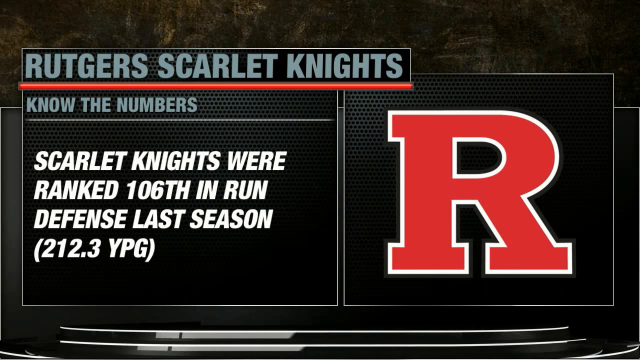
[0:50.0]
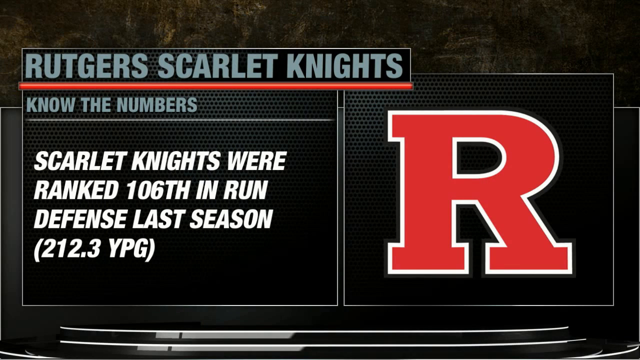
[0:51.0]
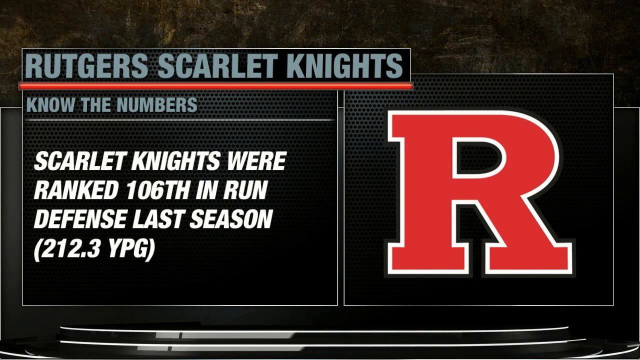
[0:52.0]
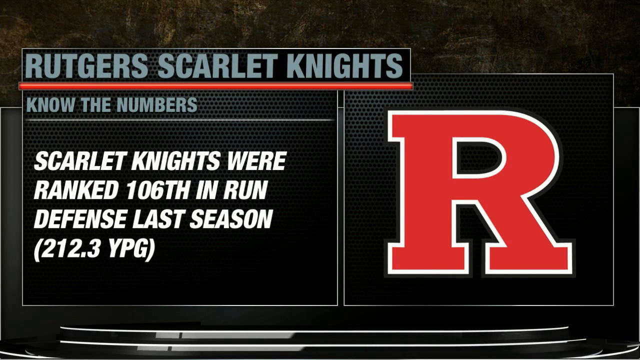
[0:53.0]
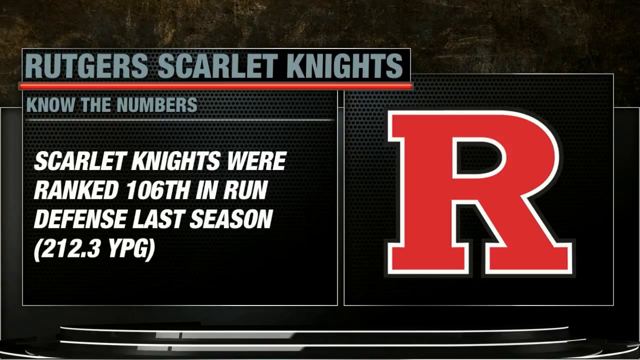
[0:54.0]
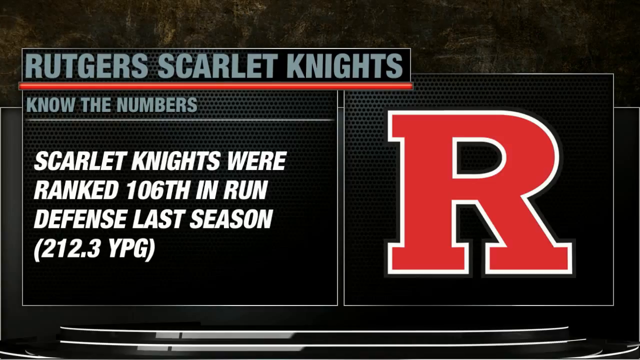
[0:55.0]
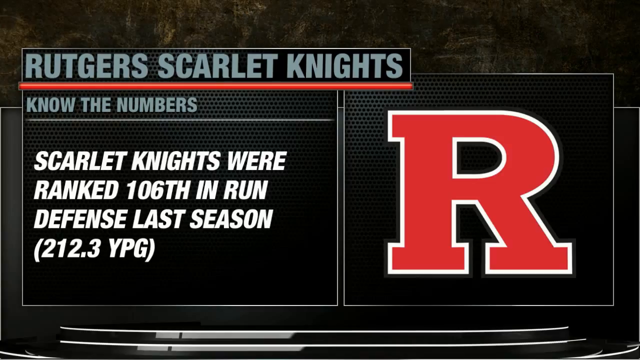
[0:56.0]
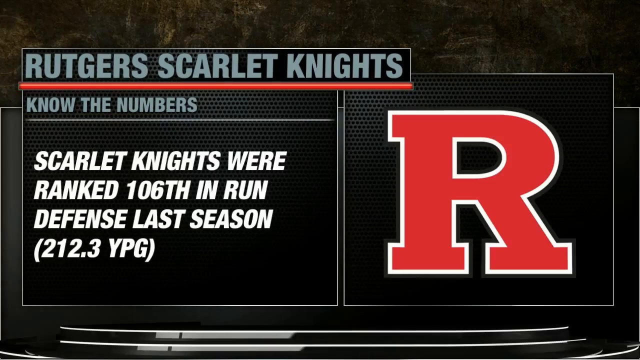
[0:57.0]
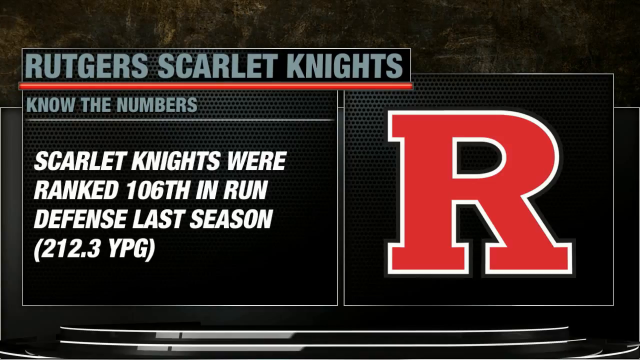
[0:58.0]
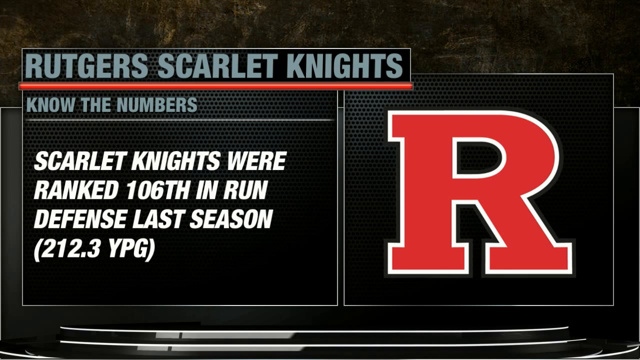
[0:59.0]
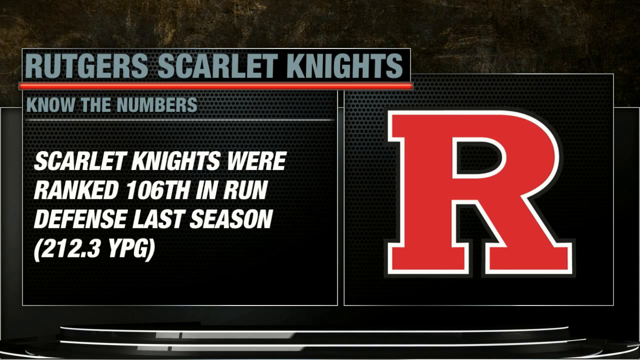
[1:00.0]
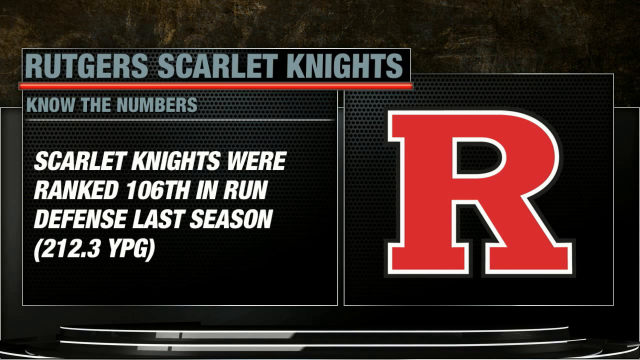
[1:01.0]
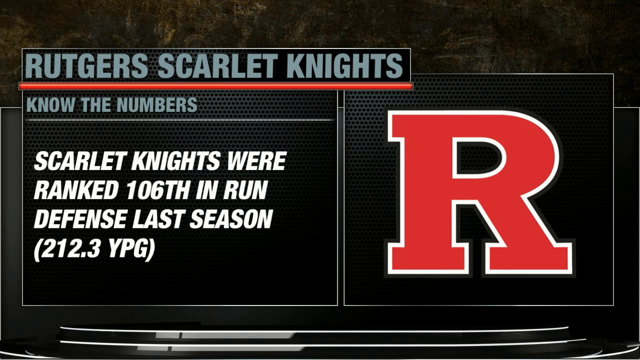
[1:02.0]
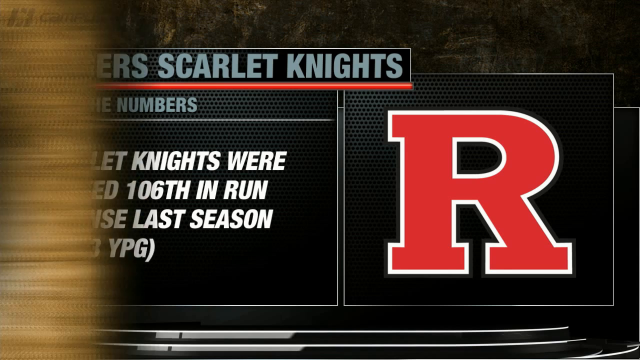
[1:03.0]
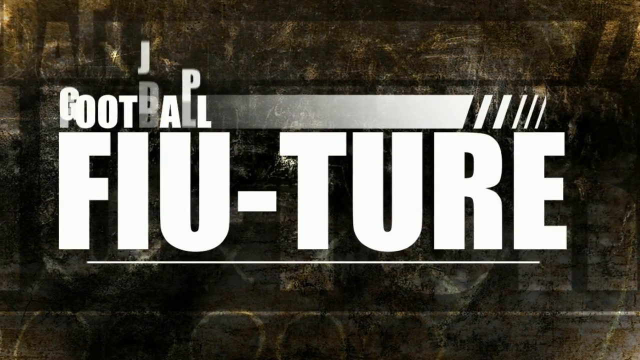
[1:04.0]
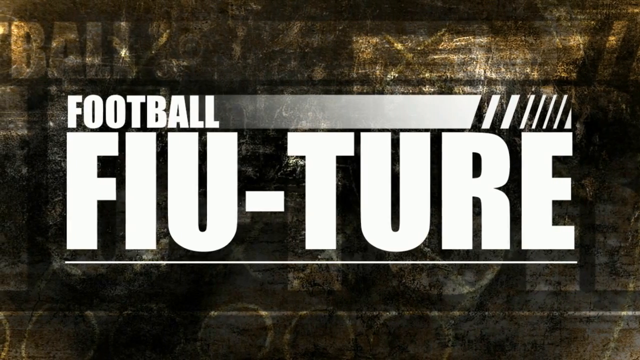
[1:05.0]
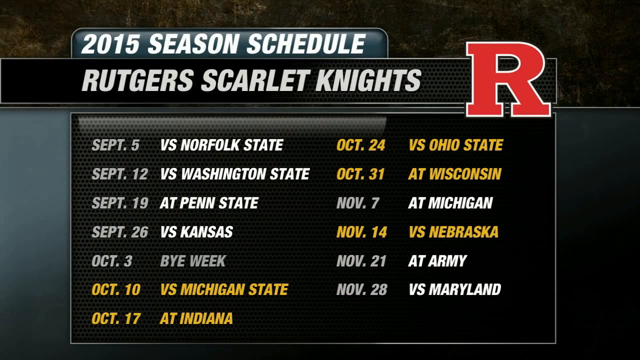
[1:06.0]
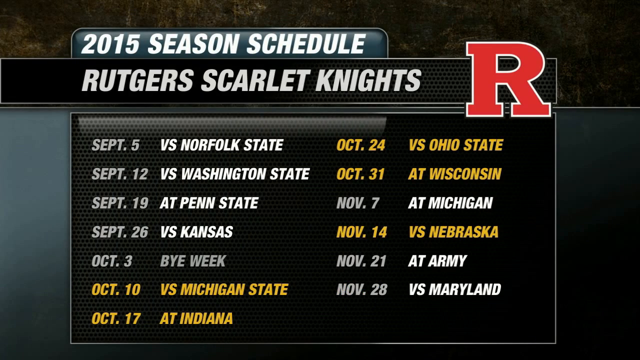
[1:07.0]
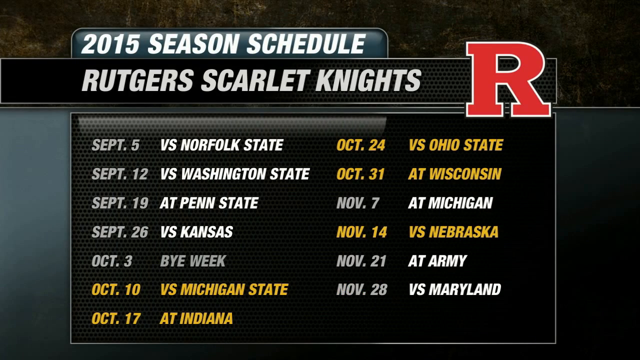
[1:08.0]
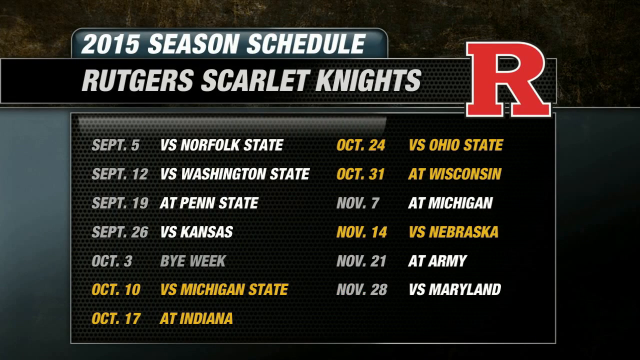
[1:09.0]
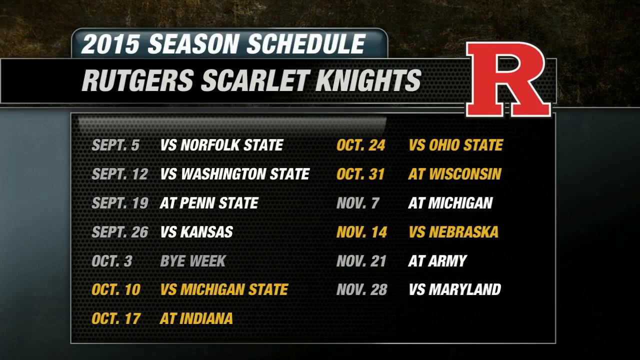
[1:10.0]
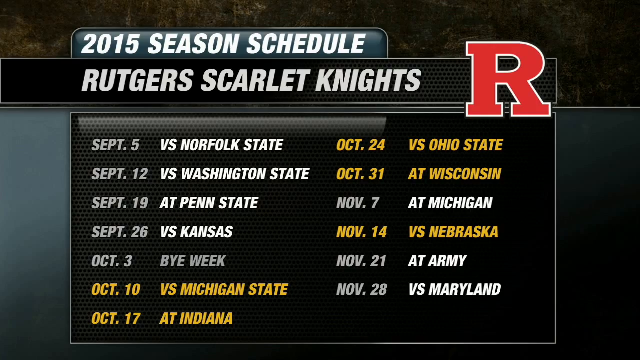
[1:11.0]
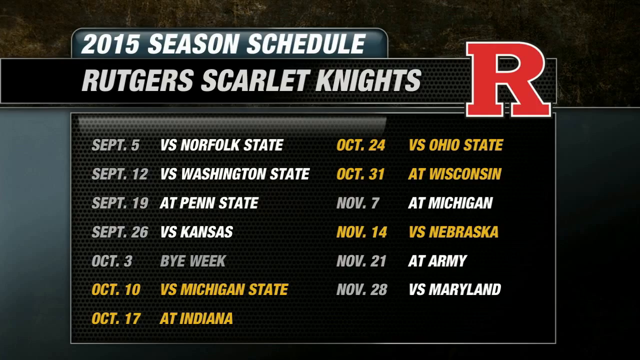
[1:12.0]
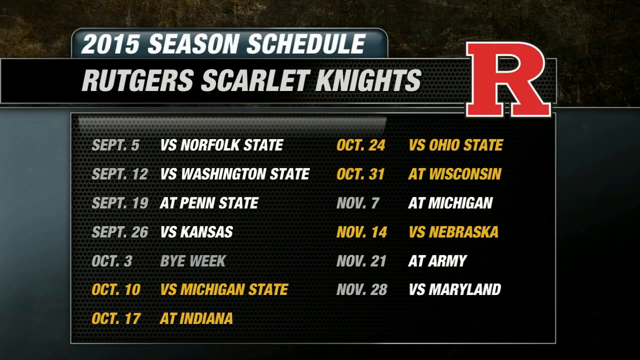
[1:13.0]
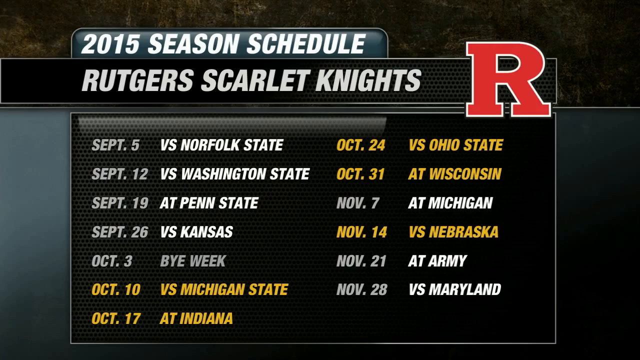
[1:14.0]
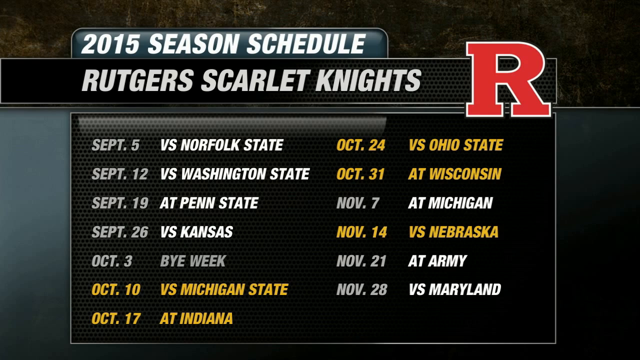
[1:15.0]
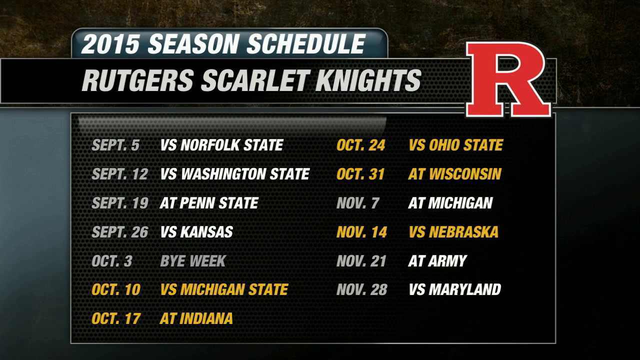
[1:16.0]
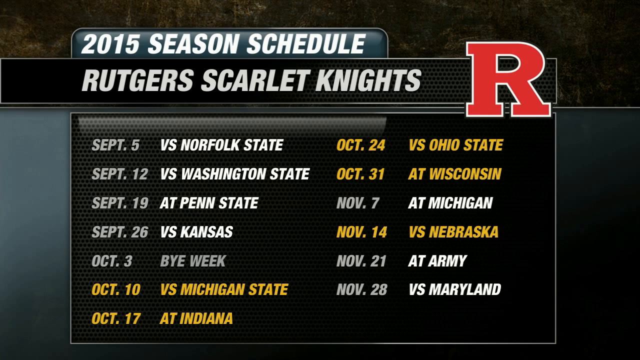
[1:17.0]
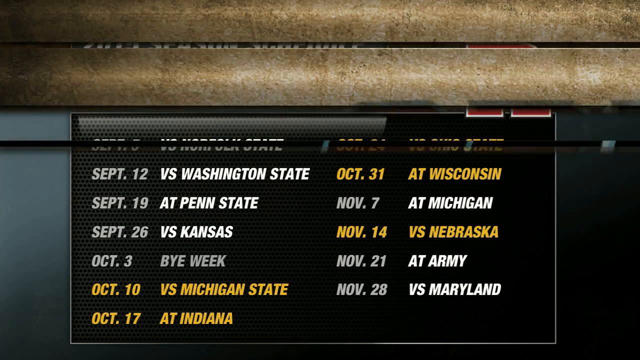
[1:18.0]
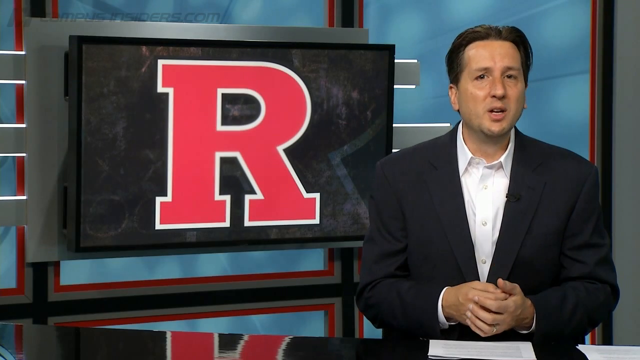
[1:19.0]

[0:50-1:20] The graphic is still on screen. It has two main feature boxes with a black background textured sort of like a honeycomb. The box on the right has the large capital R Rutgers logo. The box on the left has the text: the title "Rutgers Scarlet Knights," a subtitle "know the numbers," and the description "Scarlet Knights were ranked 106th in run defense last season," with "212.3 YPG" (yards per game) in brackets. The video cuts to a full-screen graphic reading "football future," with future spelled F-I-U-T-U-R-E with a dash, apparently a play on the sportscaster's name. Next is a full-screen graphic titled "2015 season schedule Rutgers Scarlet Knights," with the Rutgers capital R logo in the top right and a list of upcoming games from September to November, certain games highlighted in orange. The video cuts back to the sportscaster in the studio on the right, with the Rutgers logo on a TV screen on the left.